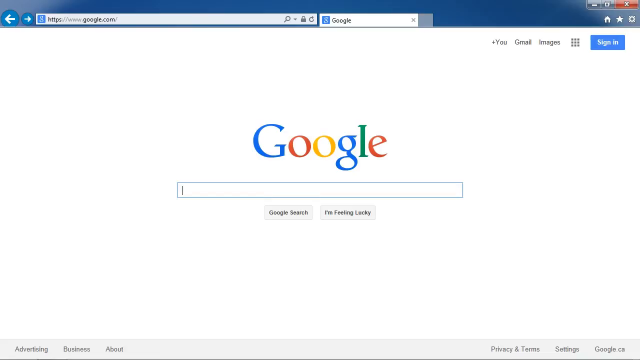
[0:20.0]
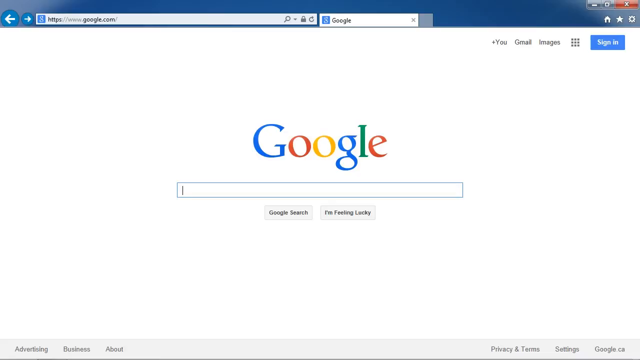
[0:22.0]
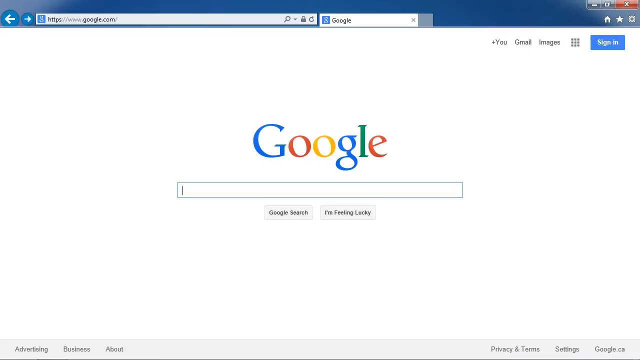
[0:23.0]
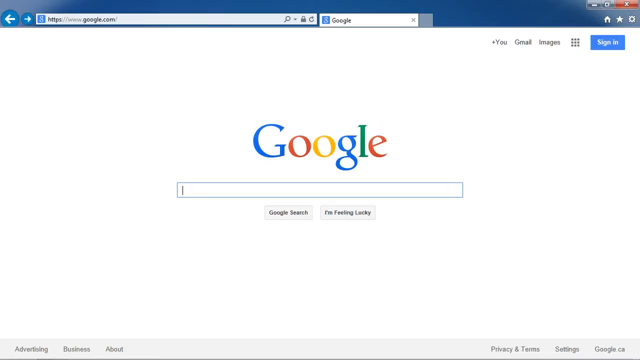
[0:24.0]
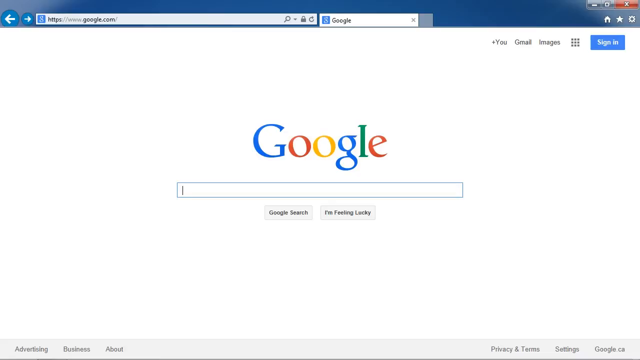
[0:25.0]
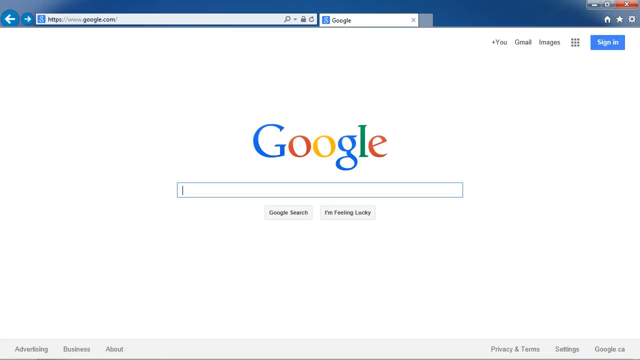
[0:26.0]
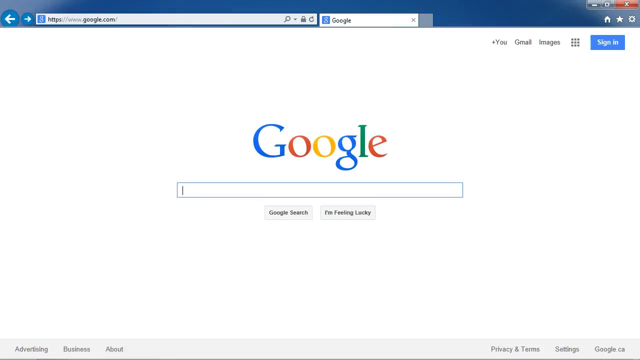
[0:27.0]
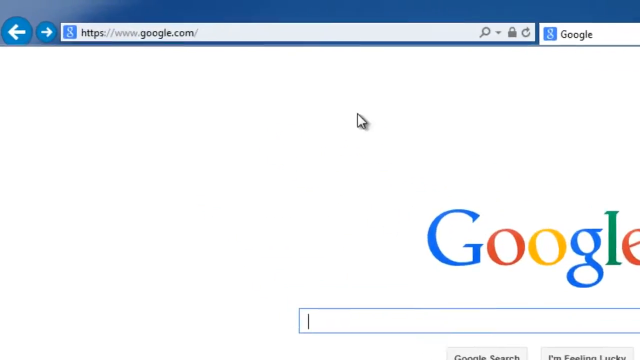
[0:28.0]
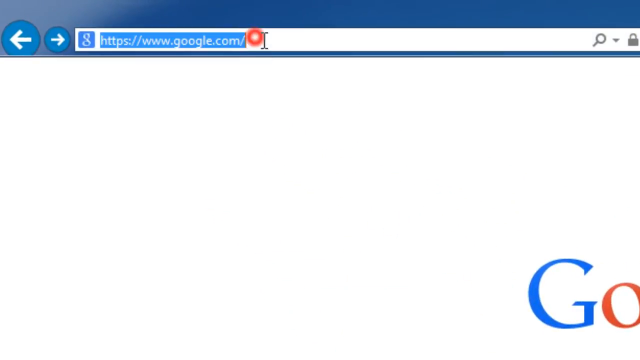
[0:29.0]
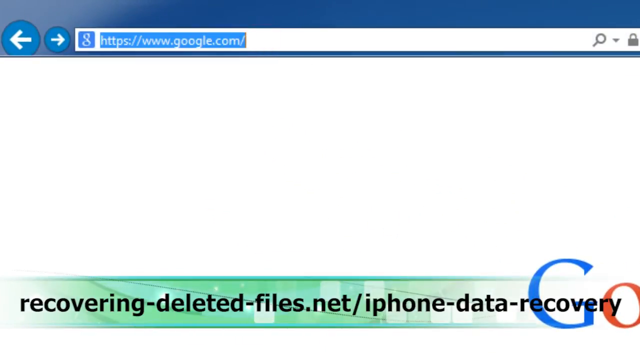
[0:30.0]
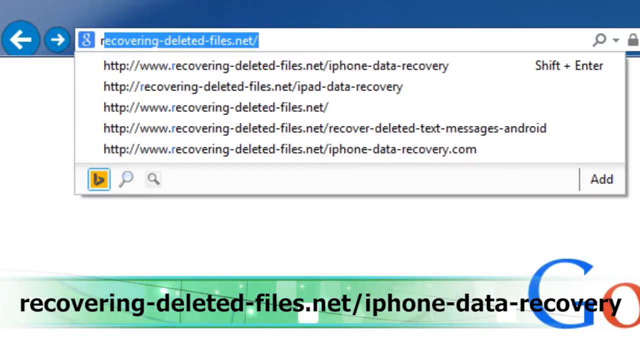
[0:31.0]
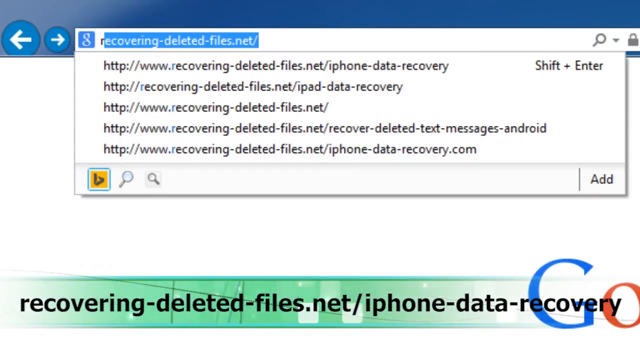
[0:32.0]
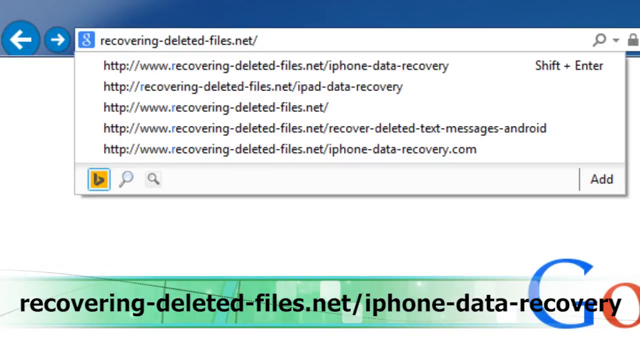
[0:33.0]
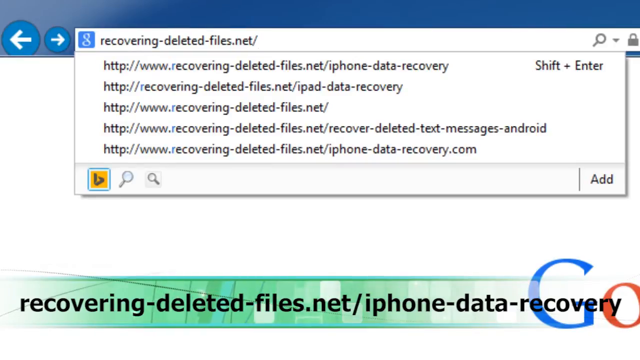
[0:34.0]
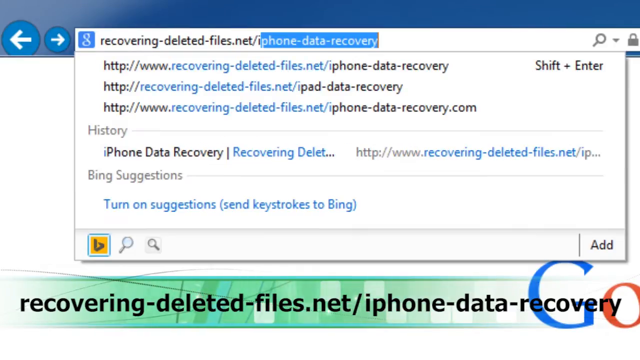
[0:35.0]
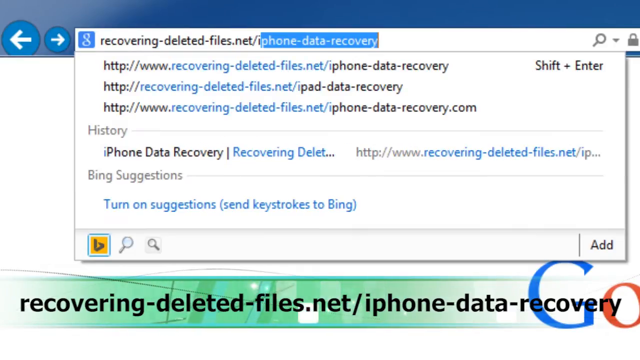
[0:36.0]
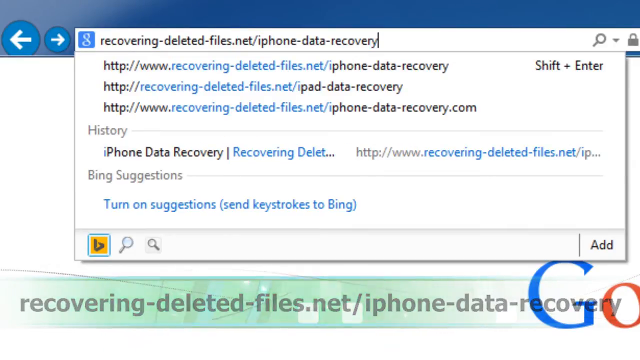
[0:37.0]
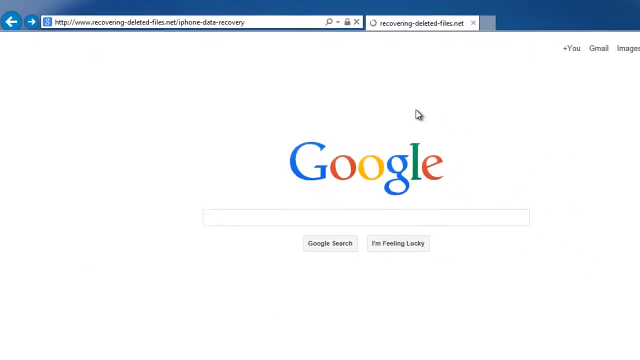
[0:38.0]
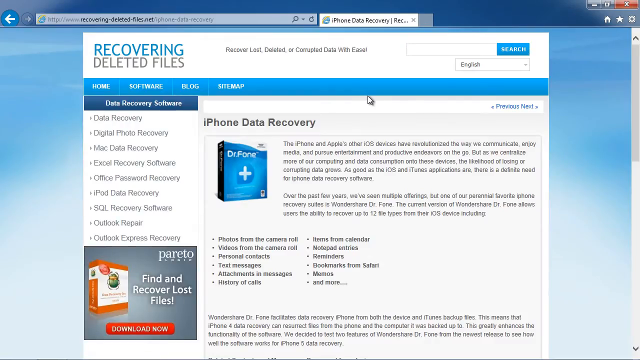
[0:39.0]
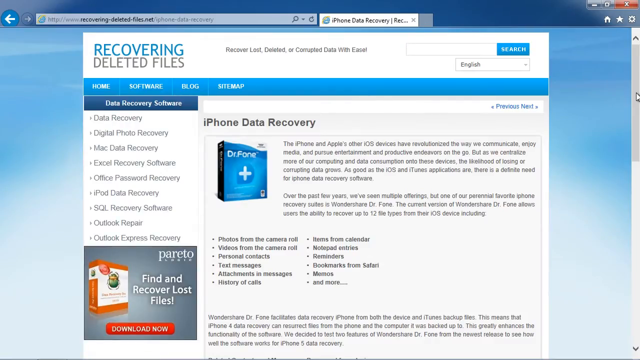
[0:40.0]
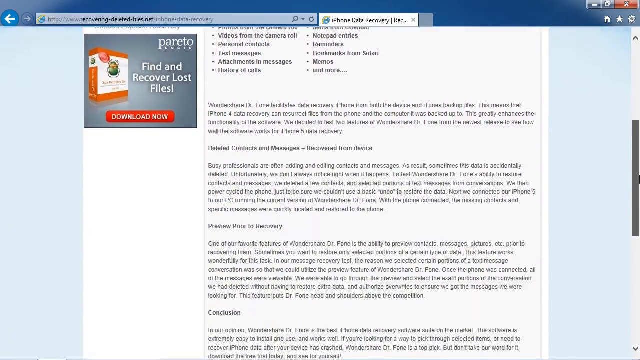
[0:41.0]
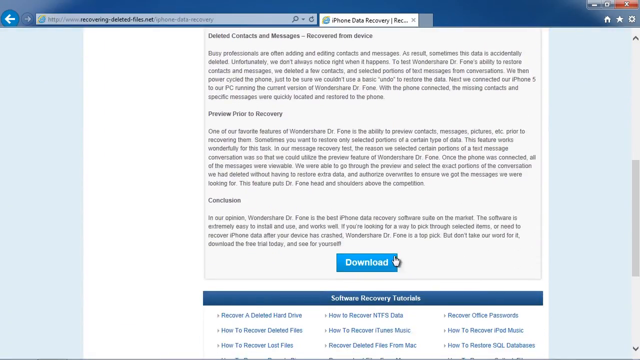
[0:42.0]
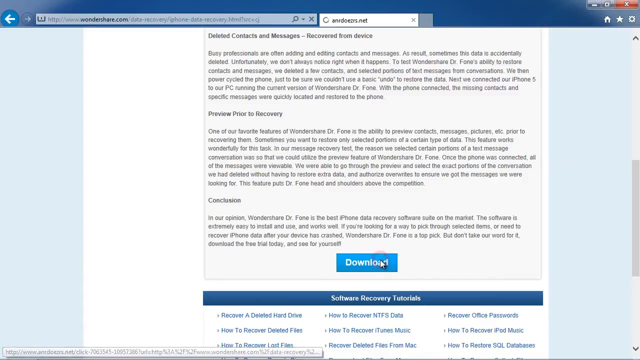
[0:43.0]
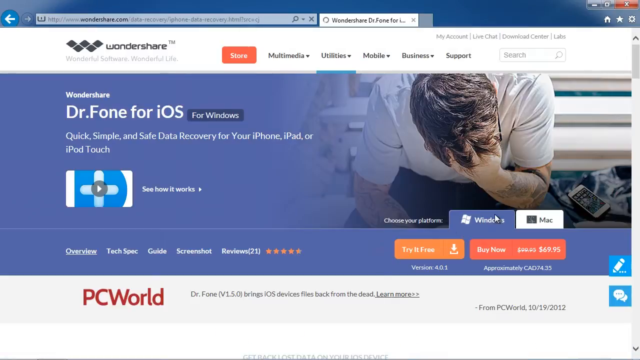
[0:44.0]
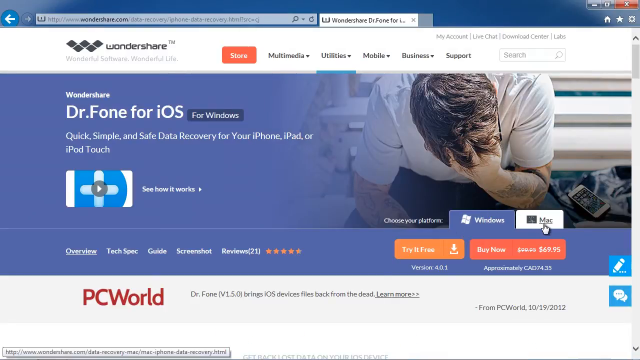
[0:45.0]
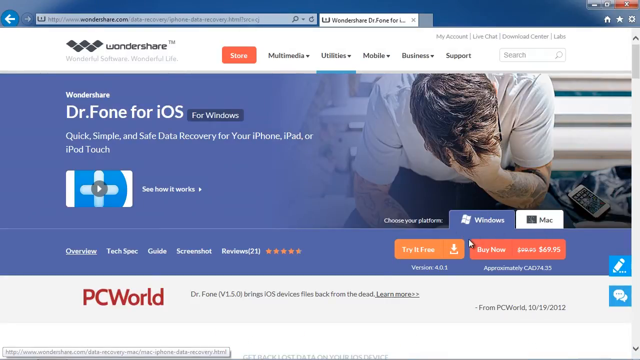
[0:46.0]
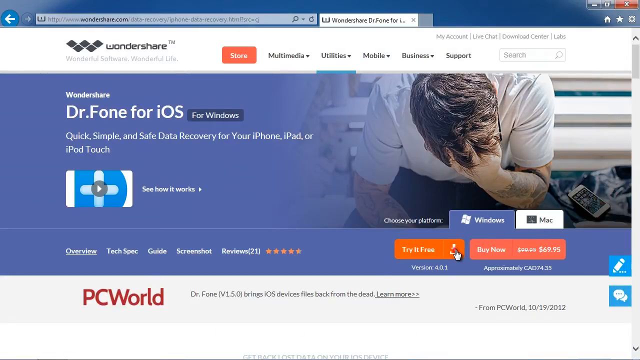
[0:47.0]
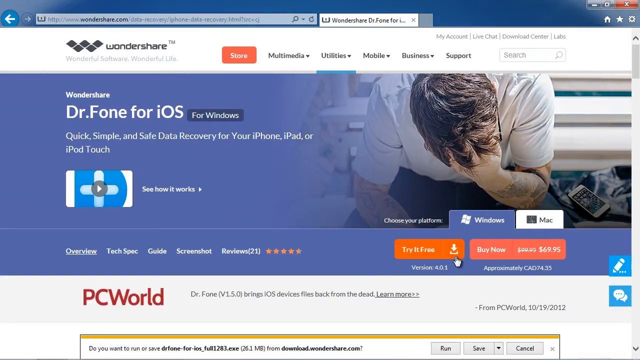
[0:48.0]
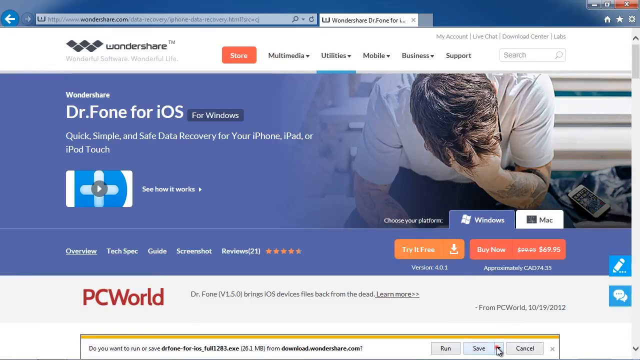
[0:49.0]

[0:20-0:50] The Google.com homepage shows the Google logo above the search bar, with a blue G, a red O, a yellow O, a blue lowercase g, a green l, and a red e. The page stays on screen for a long while. The cursor then moves to the address bar at the top of the computer screen and clicks on it, apparently going to the webpage recovering-deleted-files.net/iPhone-data-recovery, which seems to already be saved in the browser history, so it is reached easily. A webpage for recovering deleted files and iPhone data recovery then appears.